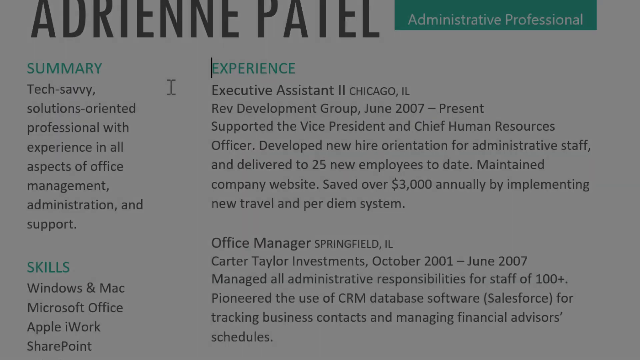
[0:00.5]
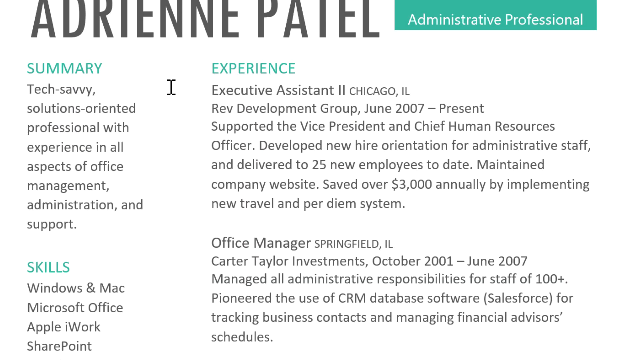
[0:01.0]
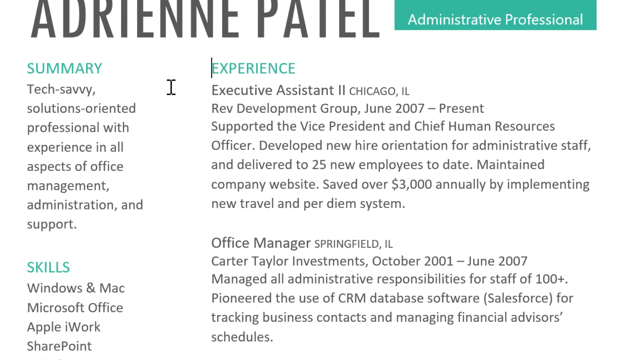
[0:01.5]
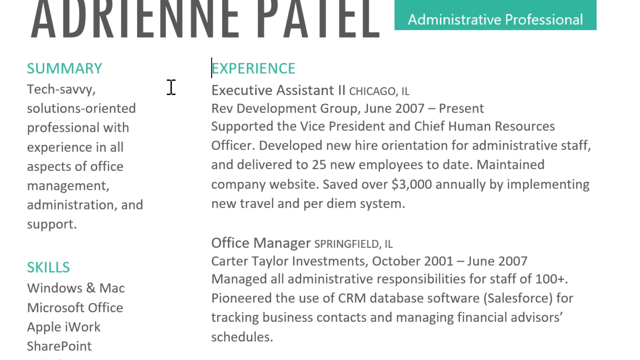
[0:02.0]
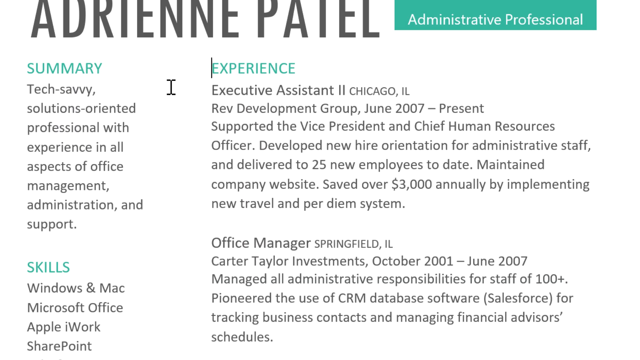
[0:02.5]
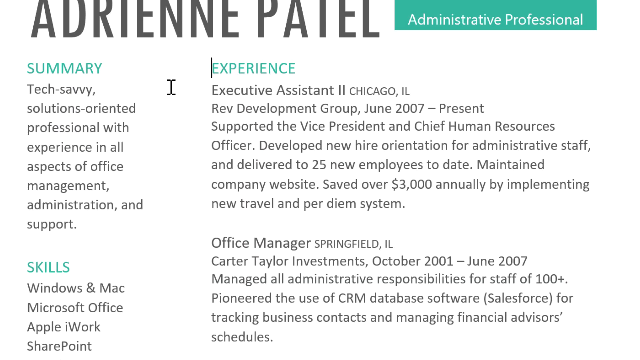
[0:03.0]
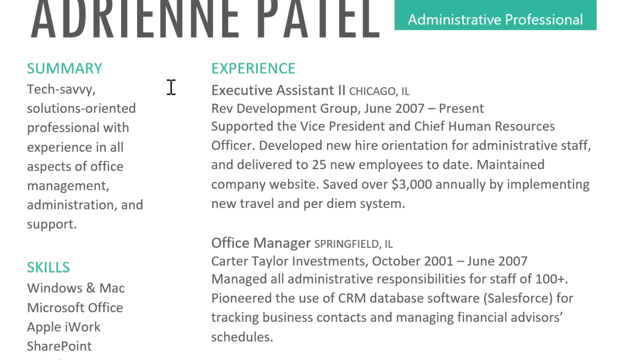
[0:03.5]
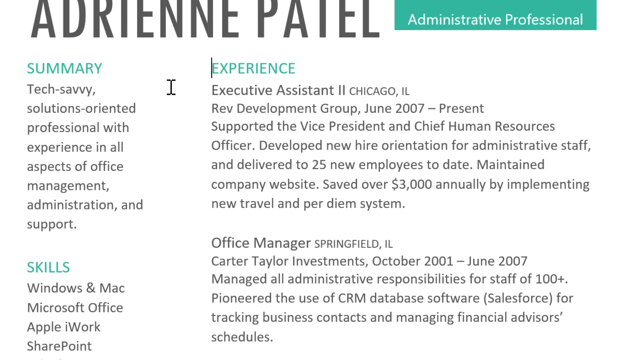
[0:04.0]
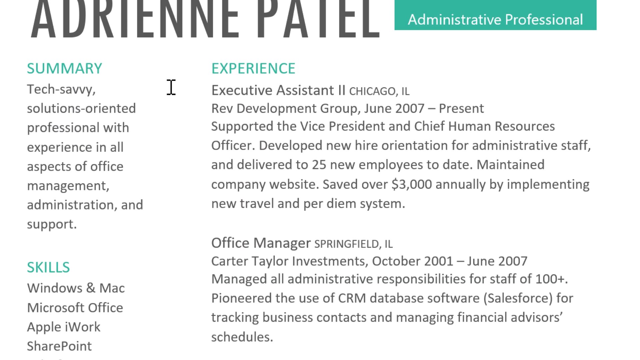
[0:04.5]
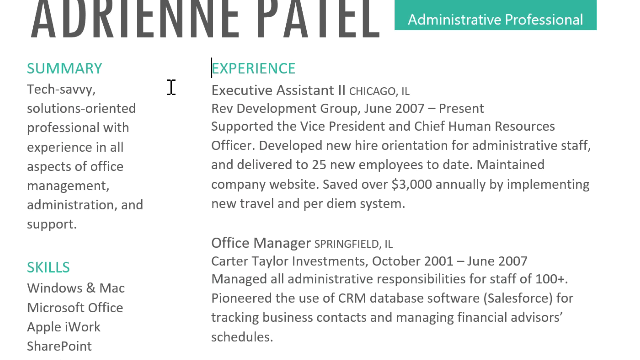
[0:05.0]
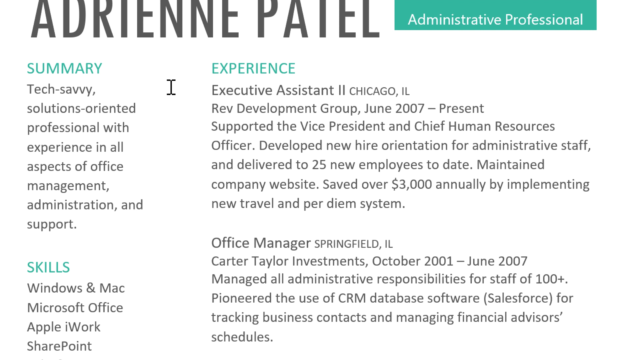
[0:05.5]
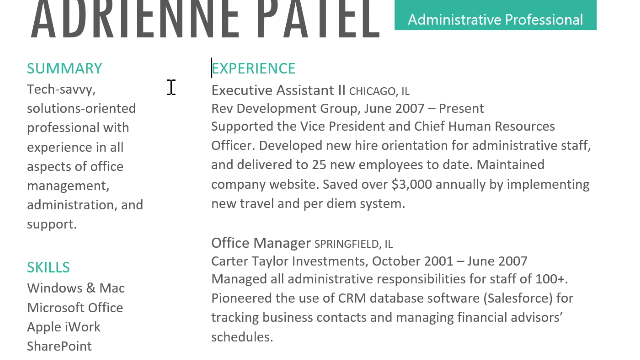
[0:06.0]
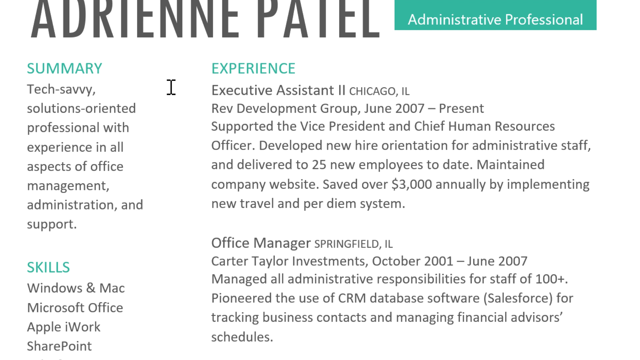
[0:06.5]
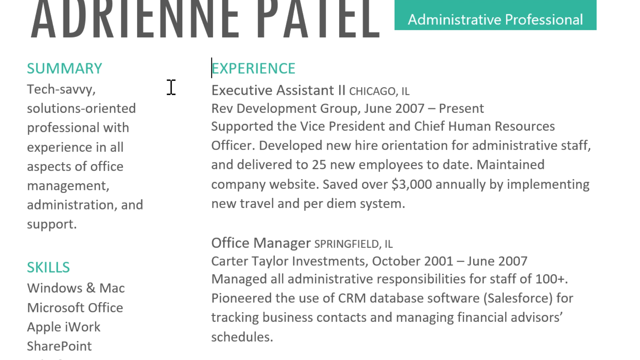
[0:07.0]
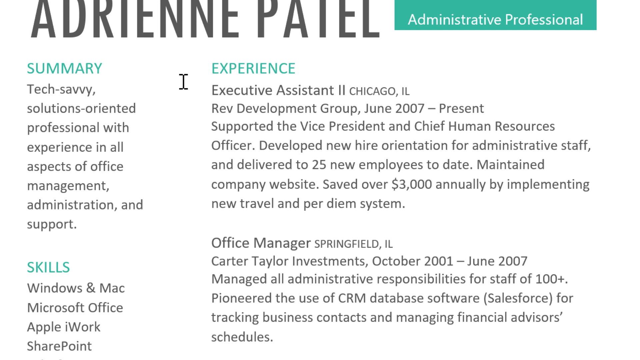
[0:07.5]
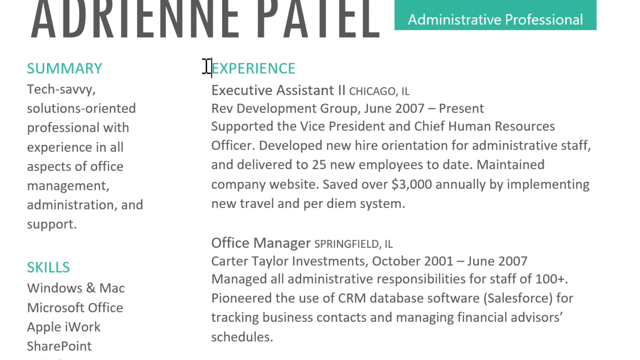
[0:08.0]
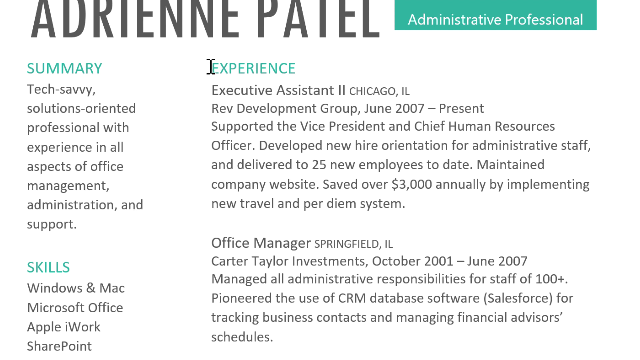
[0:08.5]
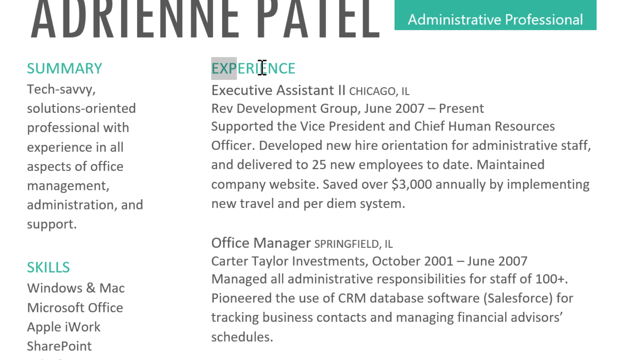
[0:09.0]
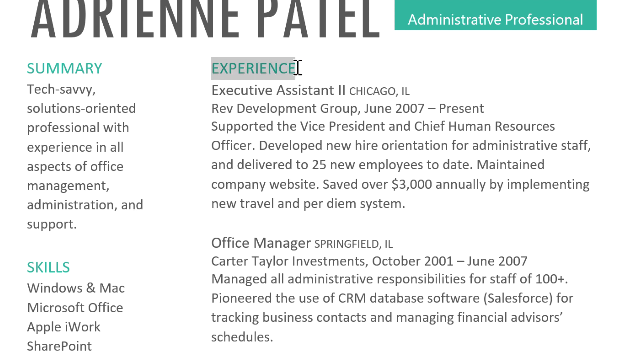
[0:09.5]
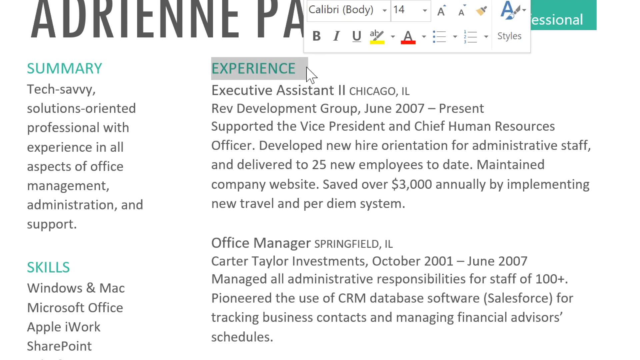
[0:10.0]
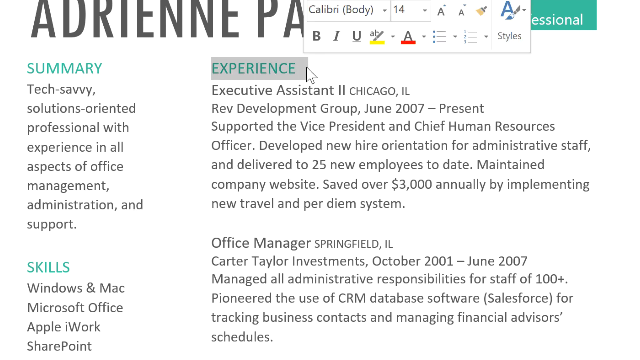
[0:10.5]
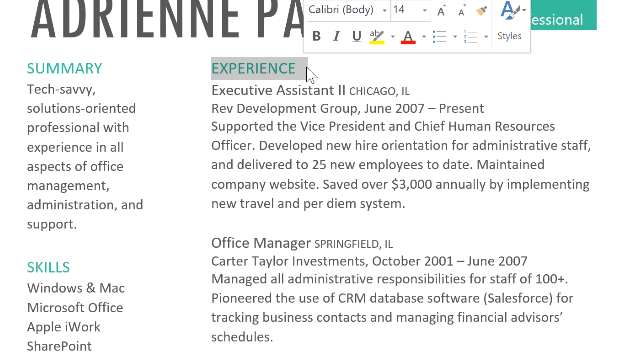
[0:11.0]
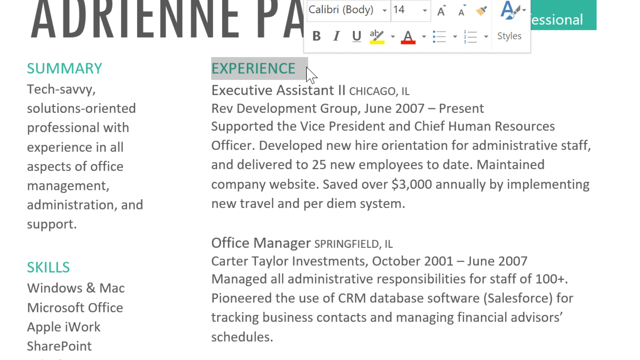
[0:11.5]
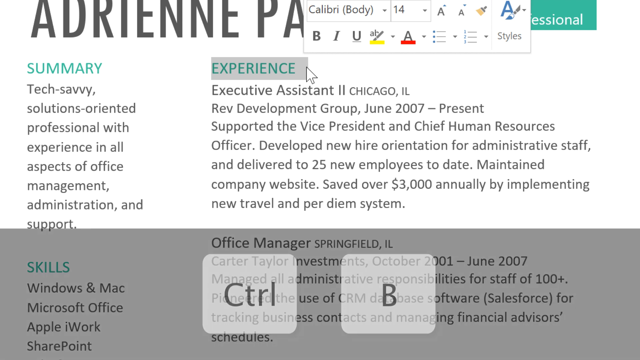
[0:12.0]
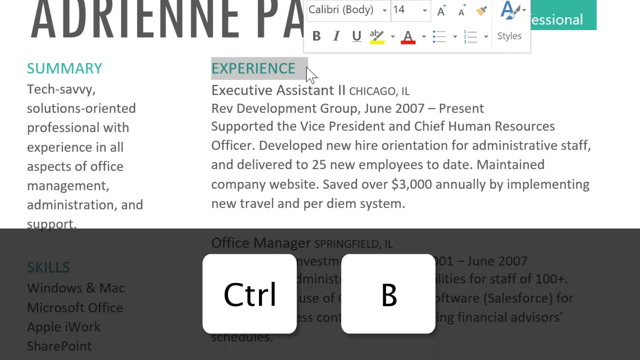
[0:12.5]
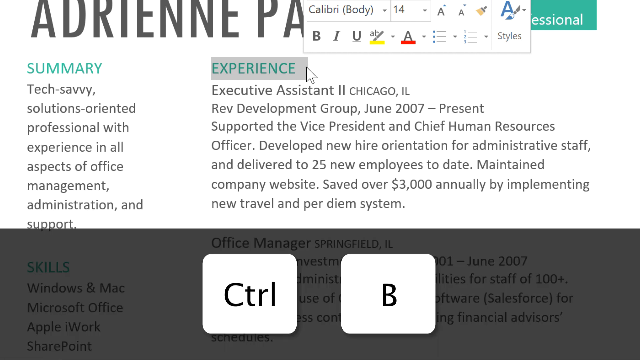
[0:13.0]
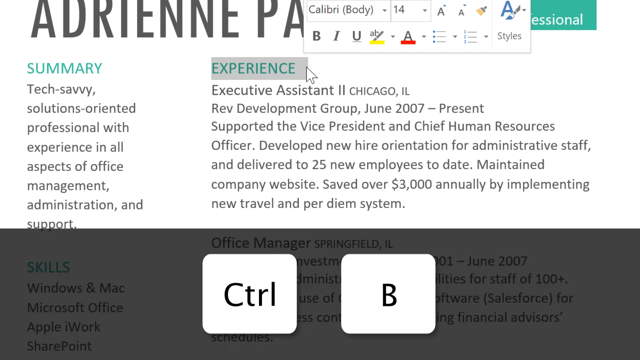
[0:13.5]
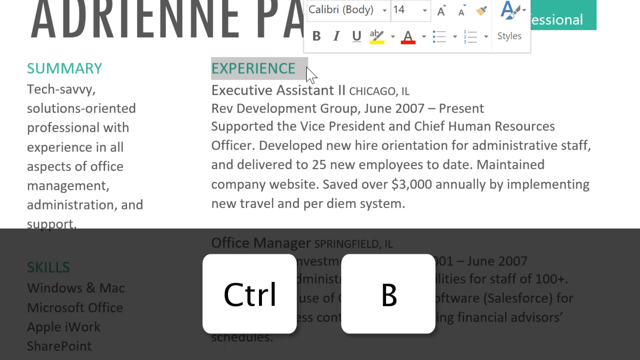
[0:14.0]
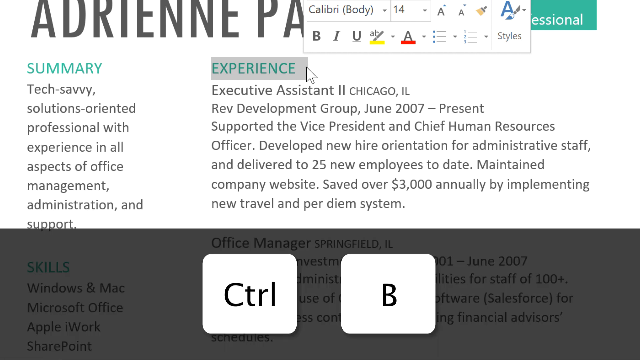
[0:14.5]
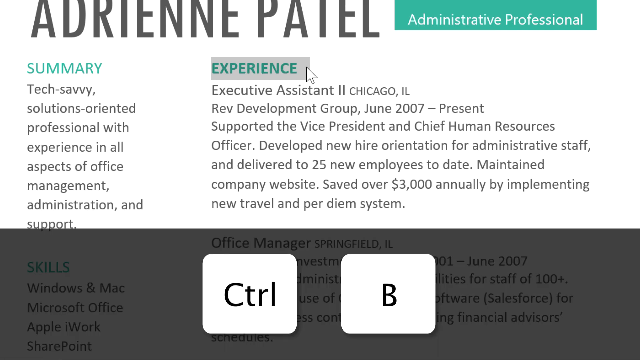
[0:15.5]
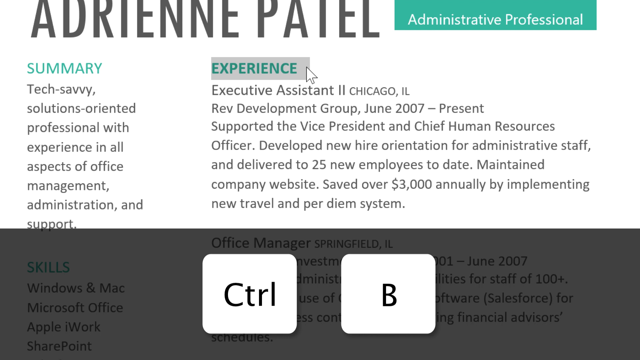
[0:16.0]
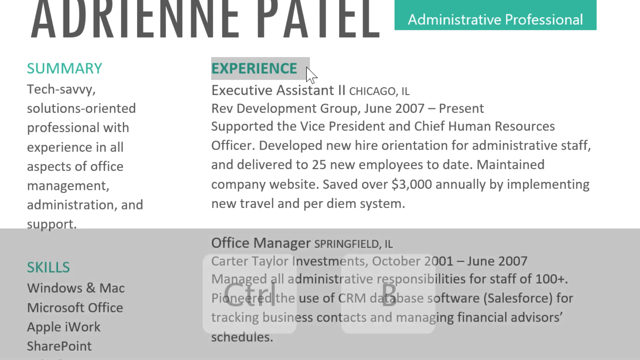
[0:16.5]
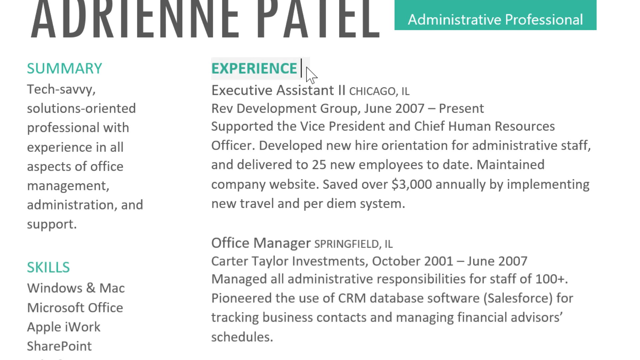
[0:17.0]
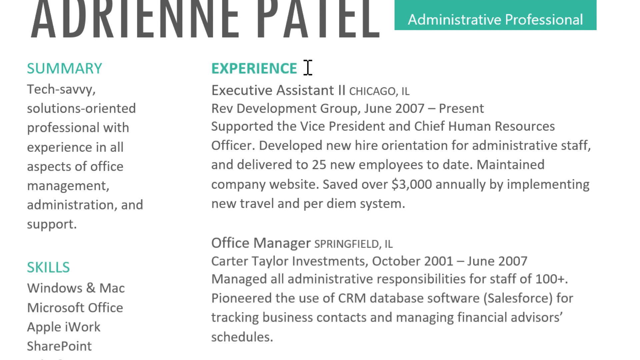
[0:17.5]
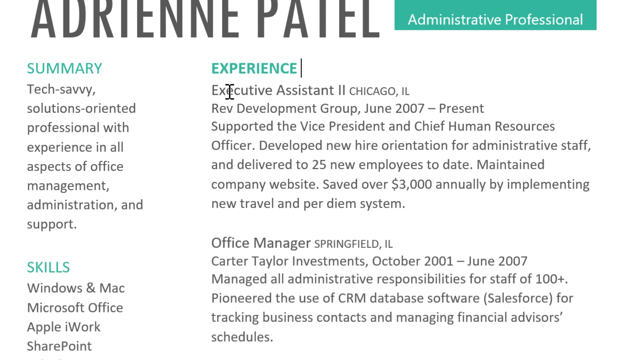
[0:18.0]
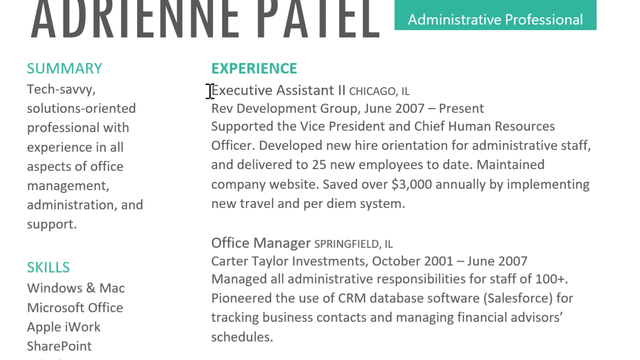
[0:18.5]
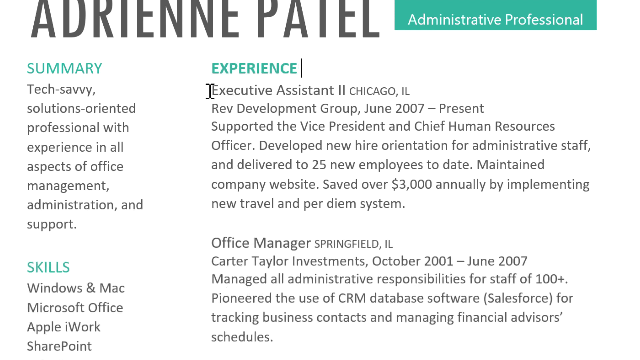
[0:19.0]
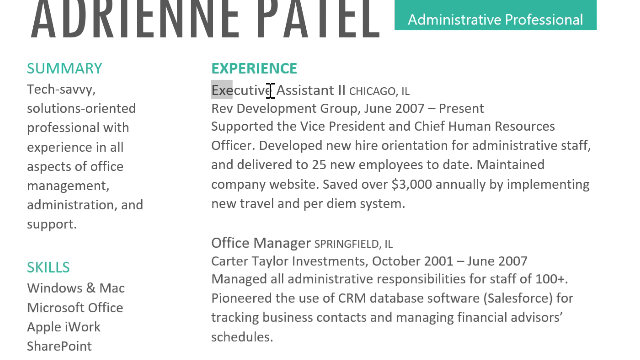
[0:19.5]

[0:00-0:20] What appears to be someone's CV is on screen, listing a person's profession, experience and skills. A mouse cursor highlights some of the words; among the noticeable words are "professional", "skills" and "experience".